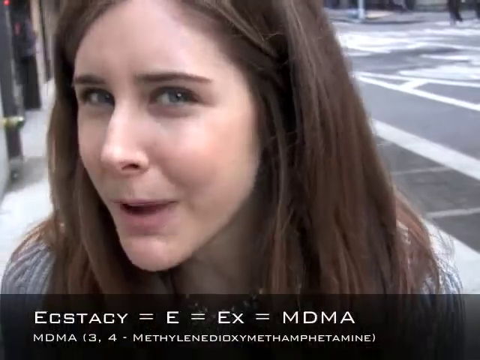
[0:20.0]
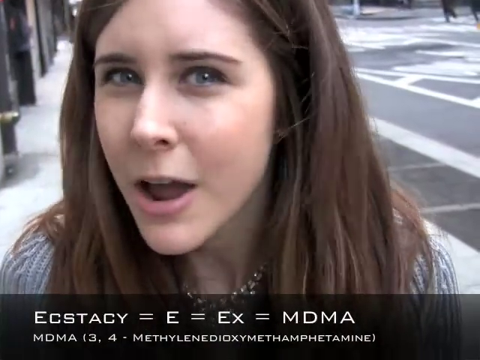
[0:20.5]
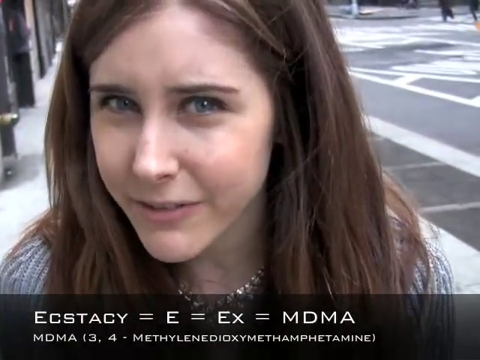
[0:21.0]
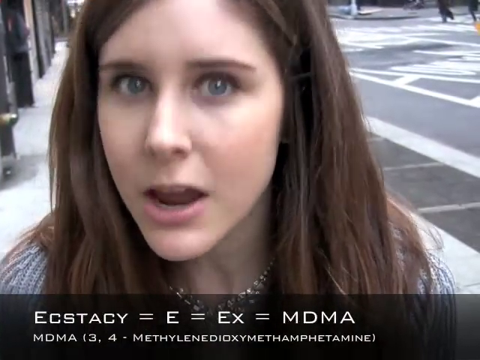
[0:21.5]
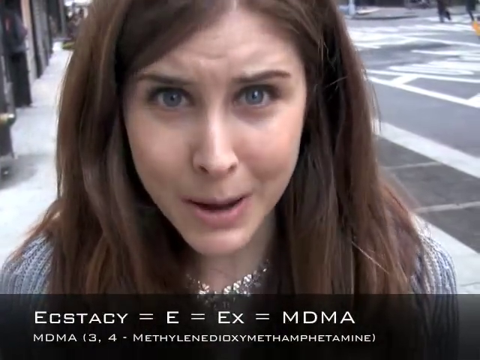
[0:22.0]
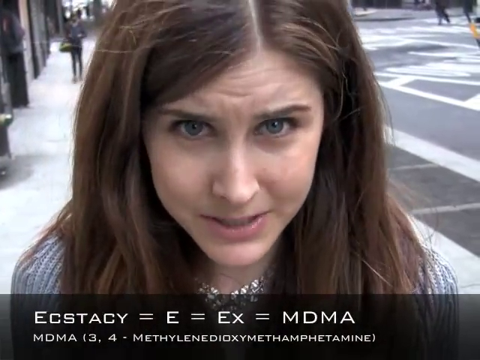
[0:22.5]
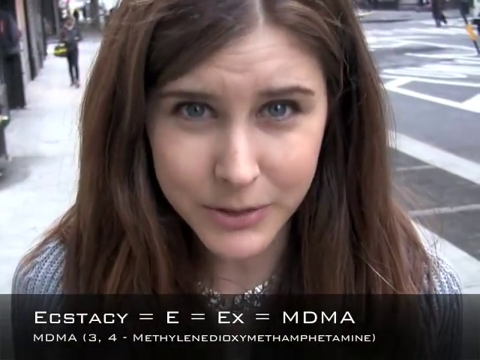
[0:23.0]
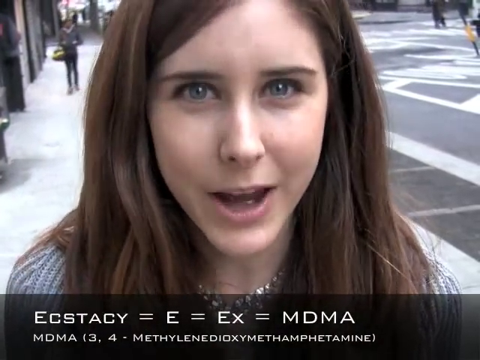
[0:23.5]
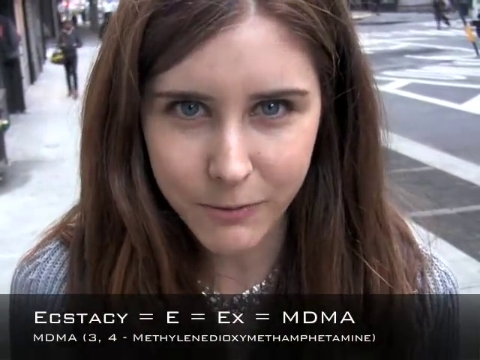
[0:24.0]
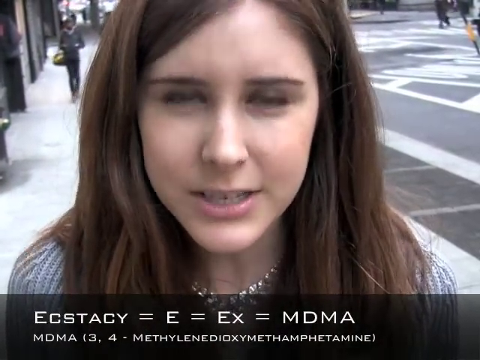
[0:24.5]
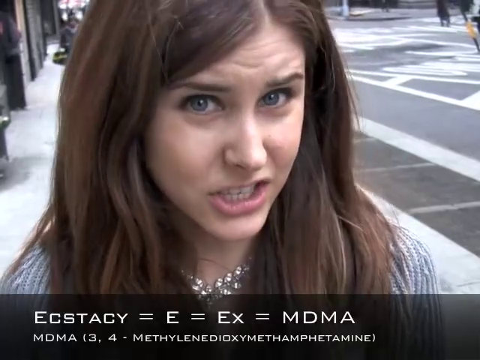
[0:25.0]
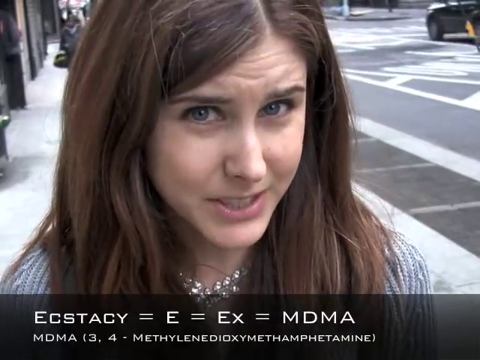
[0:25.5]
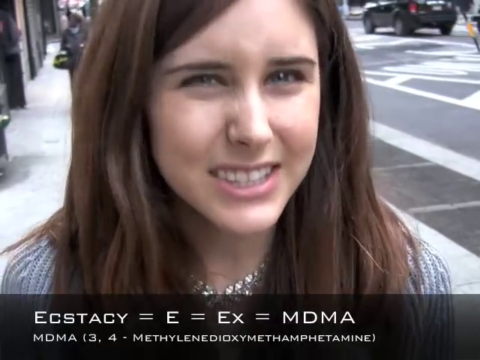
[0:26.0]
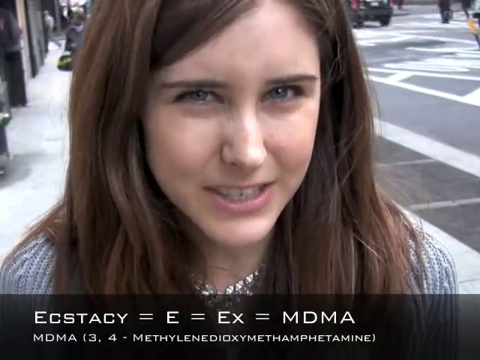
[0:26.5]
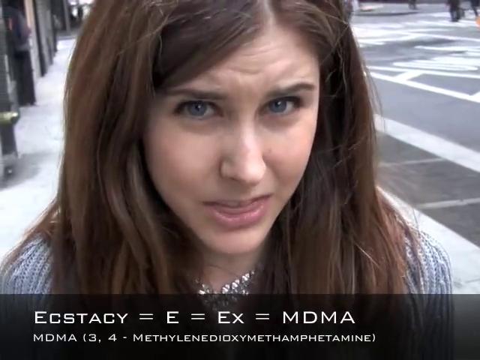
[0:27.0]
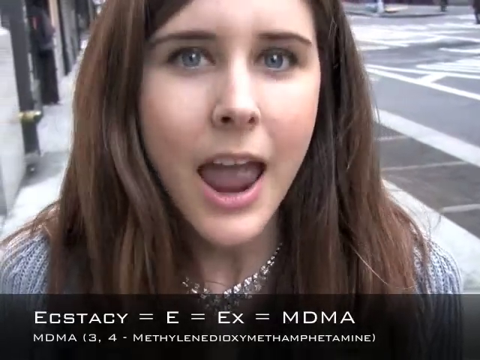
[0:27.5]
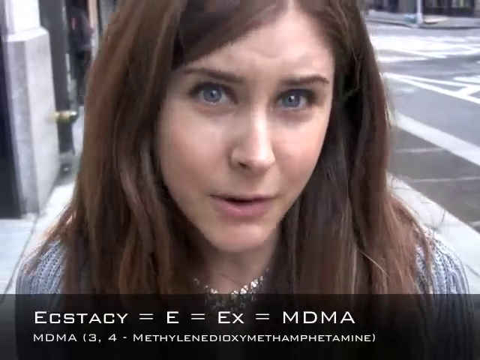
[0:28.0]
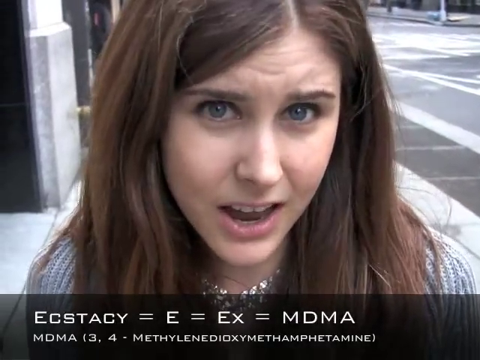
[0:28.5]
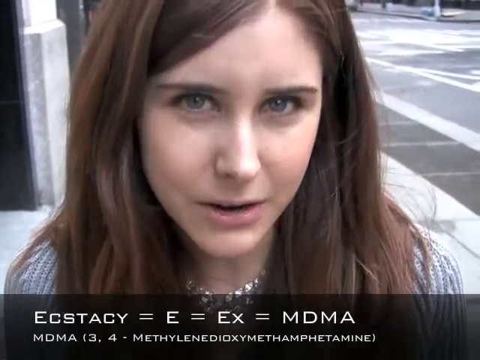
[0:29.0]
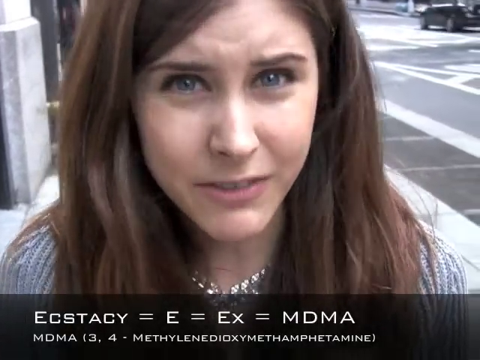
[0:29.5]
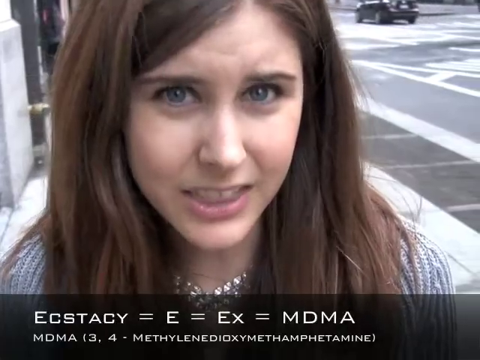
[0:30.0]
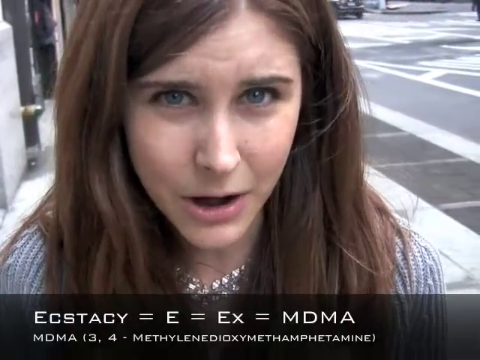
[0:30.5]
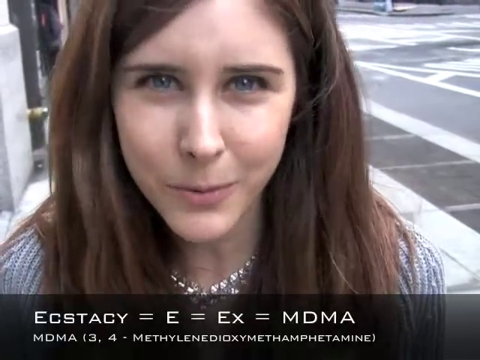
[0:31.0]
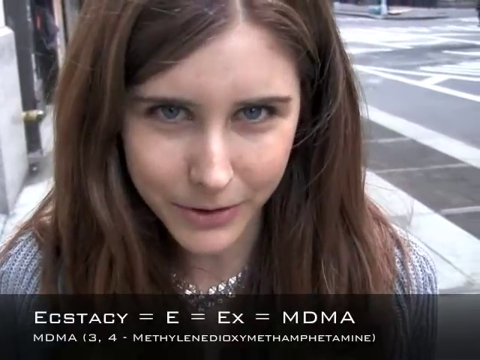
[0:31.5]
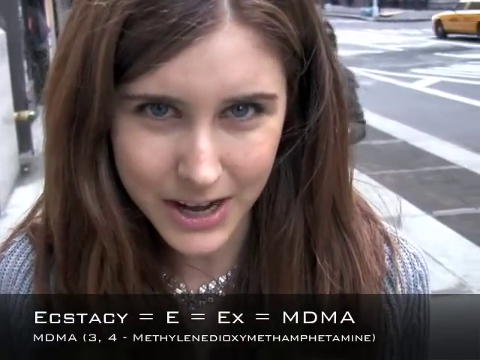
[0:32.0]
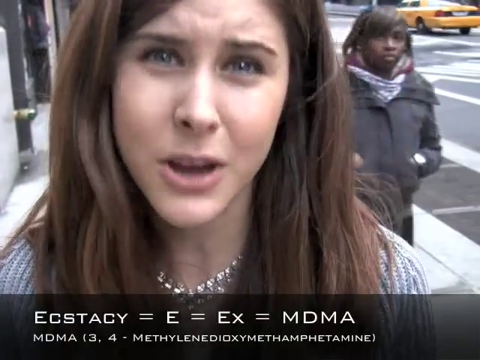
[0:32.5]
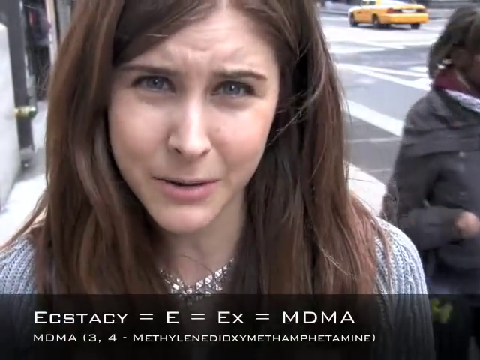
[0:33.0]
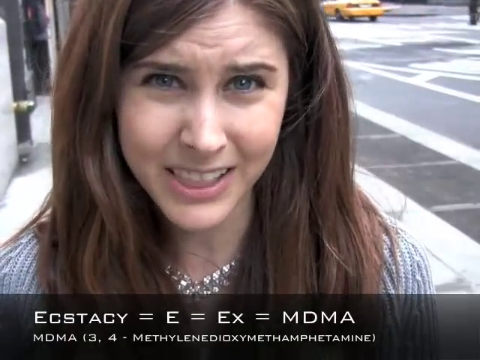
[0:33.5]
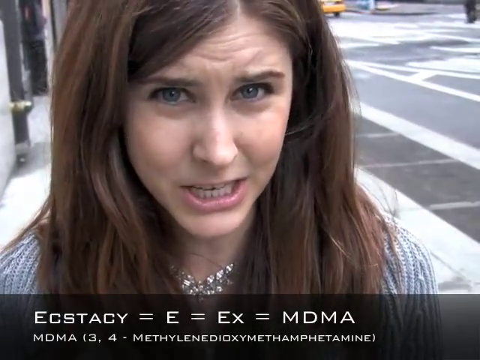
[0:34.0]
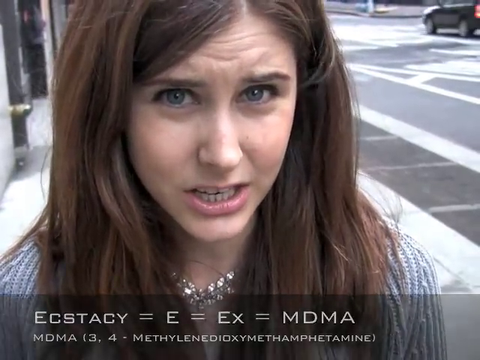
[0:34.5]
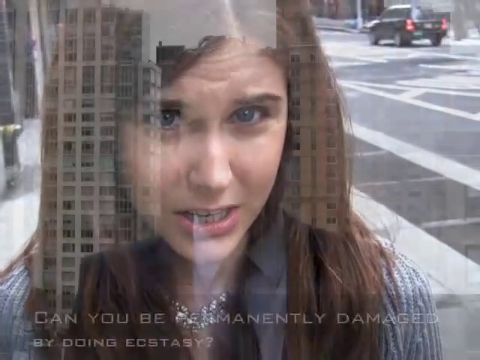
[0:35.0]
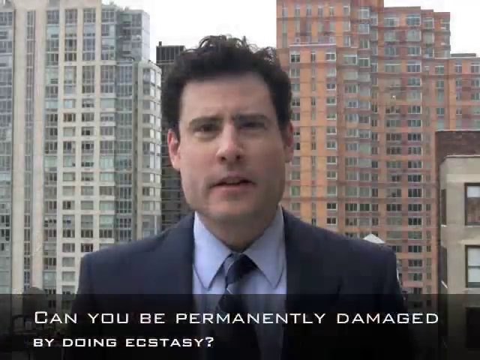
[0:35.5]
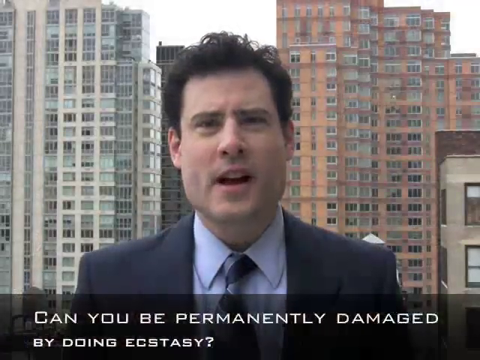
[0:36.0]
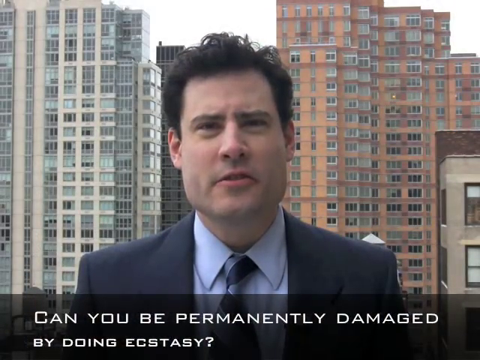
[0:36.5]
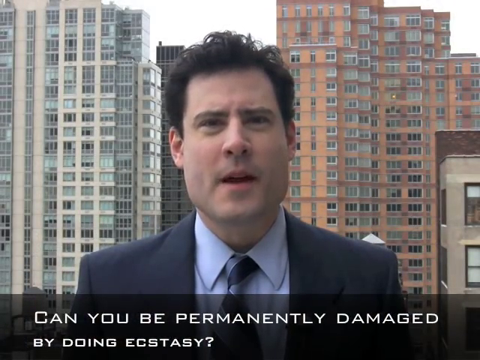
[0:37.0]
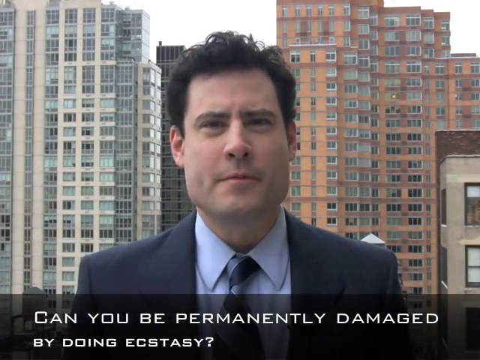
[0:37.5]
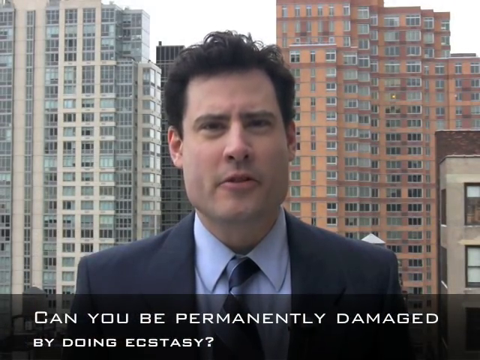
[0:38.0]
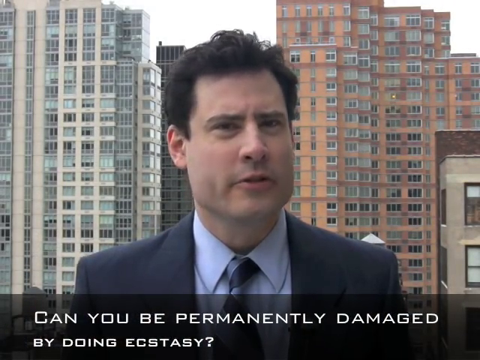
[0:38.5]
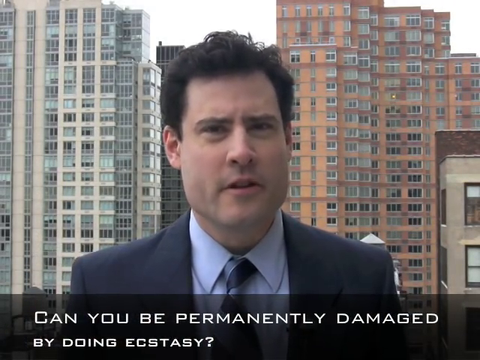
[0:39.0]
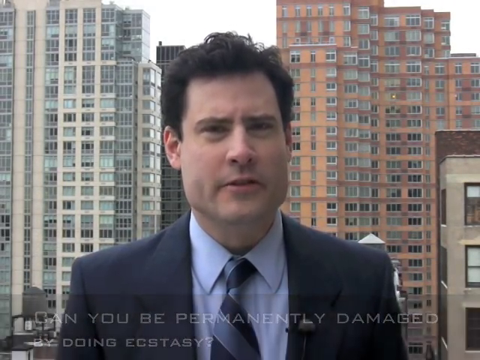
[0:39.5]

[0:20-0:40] A young woman, approximately in her early 20s, has thick, straight dark brown hair, very pale skin and an oval face; she is attractive and wears little makeup, if any. She stands on a sidewalk on the left side of the street at what looks like an urban city corner, facing the camera. She is seen from the shoulders up, apparently wearing a gray or silver shirt or jacket, and has light blue eyes. She talks directly to the camera, face forward, her head bobbing up and down as she speaks. Below her face, a black banner reads in capital letters "Ecstasy = E = EX = MDMA", and beneath that, in smaller capital letters, "MDMA 13-4" and the word "Methylendioxymethamphetamine", apparently the drug she is discussing. One person walks by on her right.